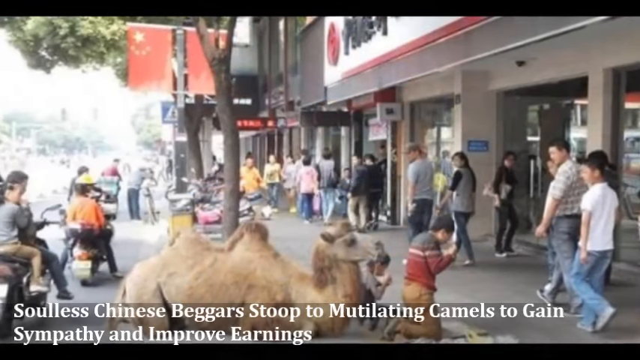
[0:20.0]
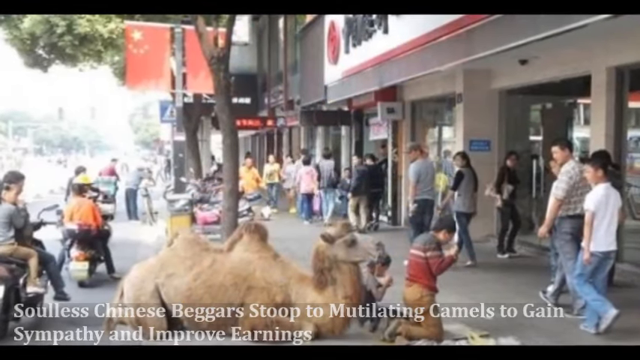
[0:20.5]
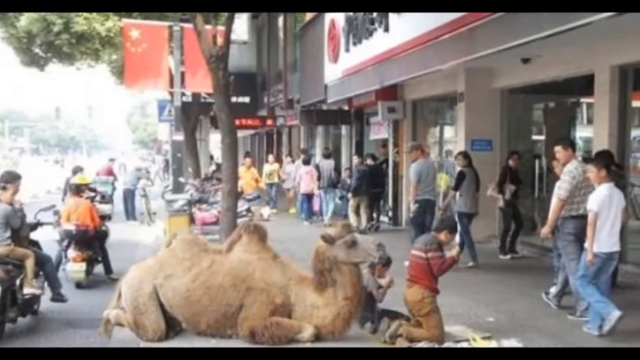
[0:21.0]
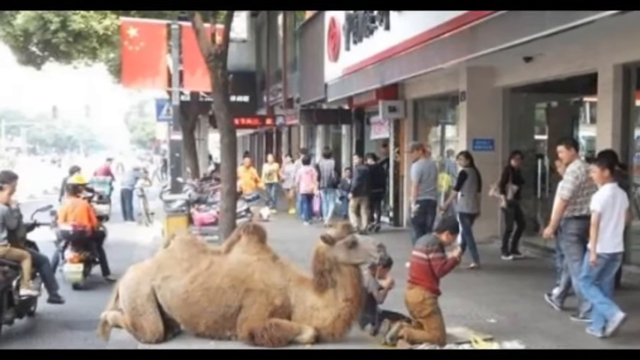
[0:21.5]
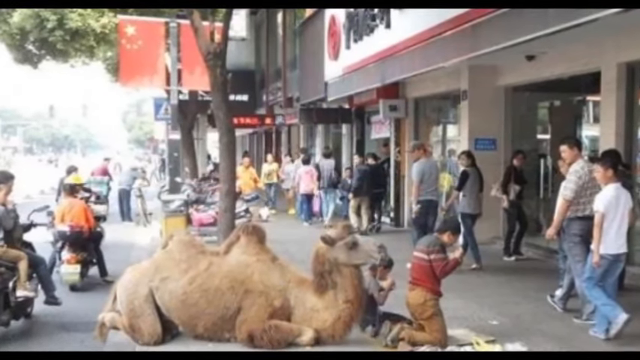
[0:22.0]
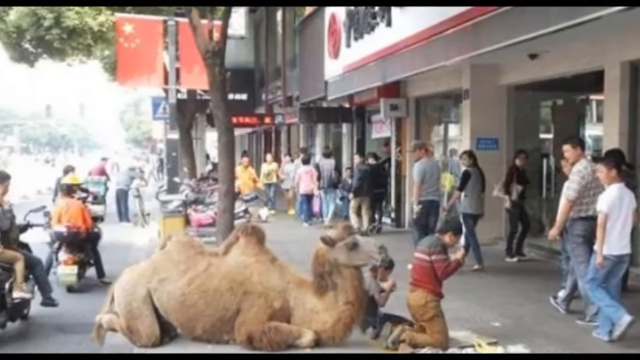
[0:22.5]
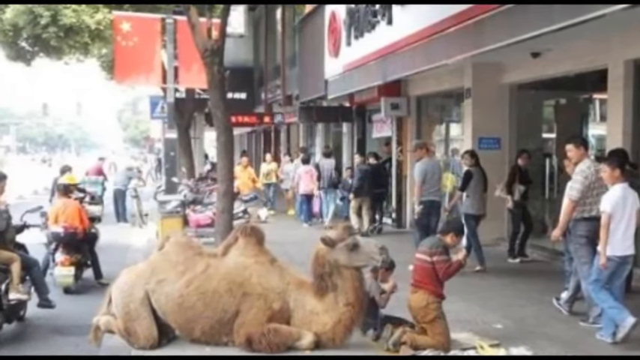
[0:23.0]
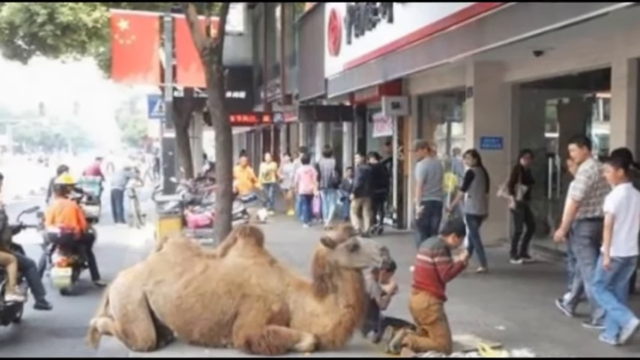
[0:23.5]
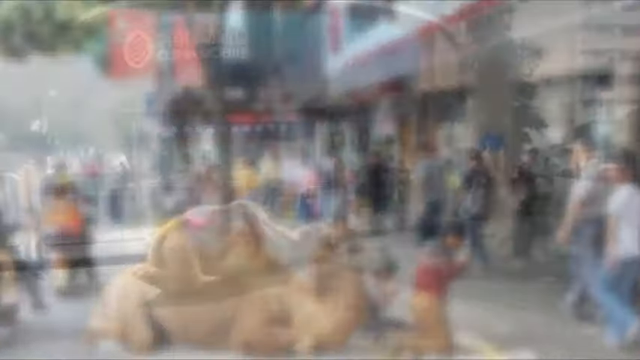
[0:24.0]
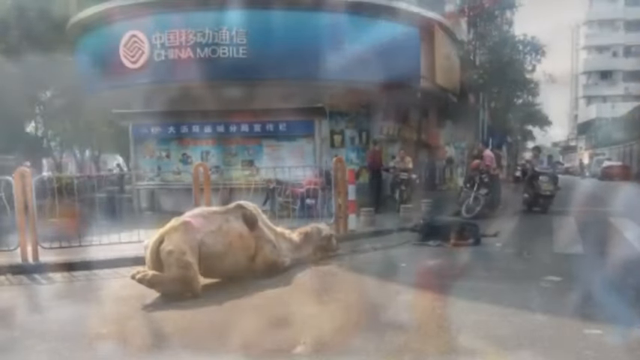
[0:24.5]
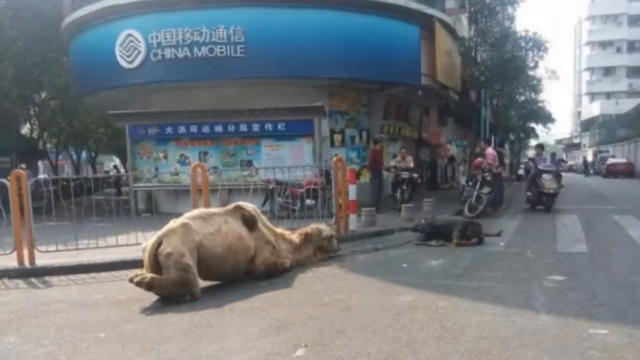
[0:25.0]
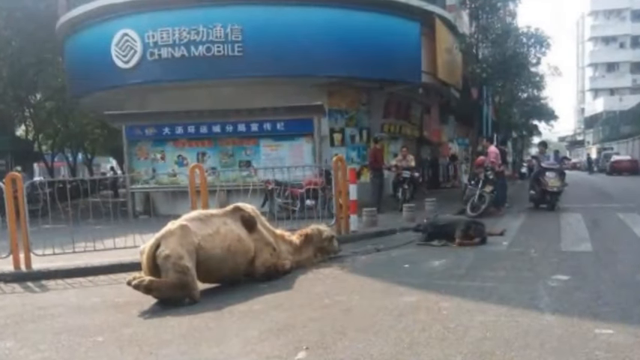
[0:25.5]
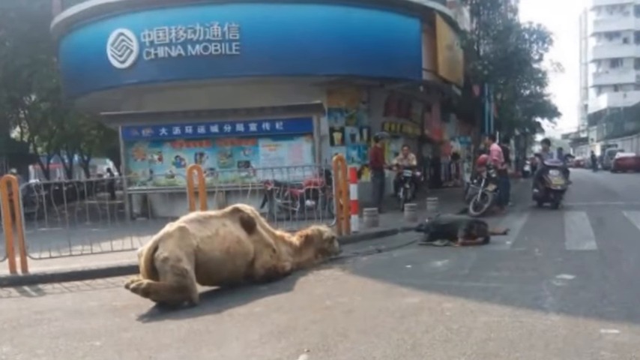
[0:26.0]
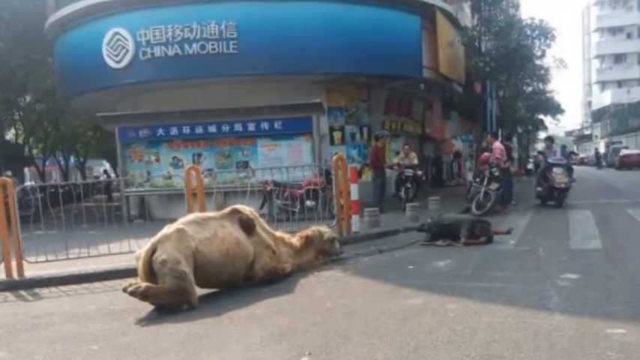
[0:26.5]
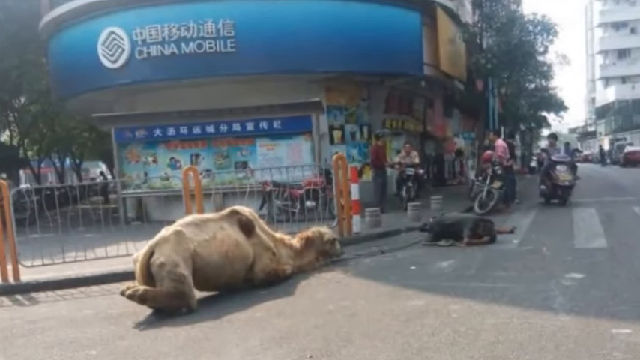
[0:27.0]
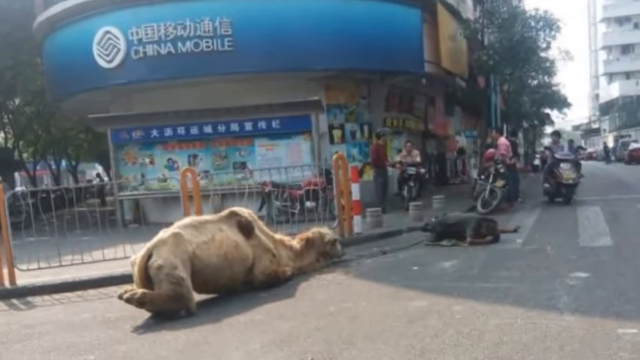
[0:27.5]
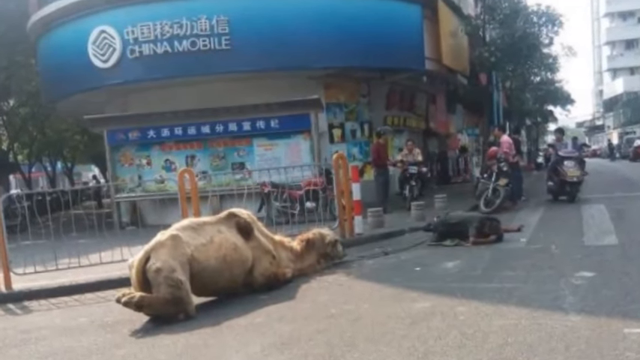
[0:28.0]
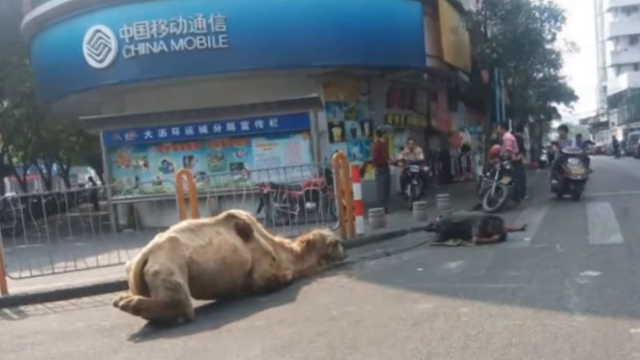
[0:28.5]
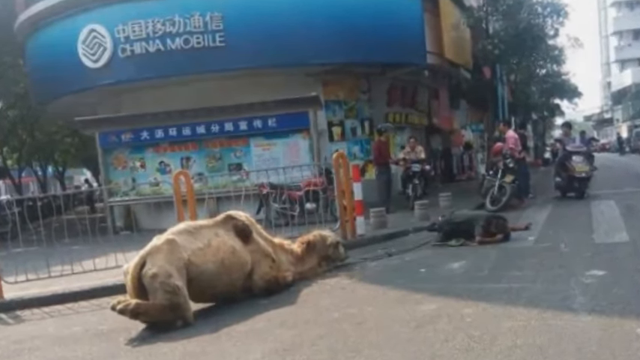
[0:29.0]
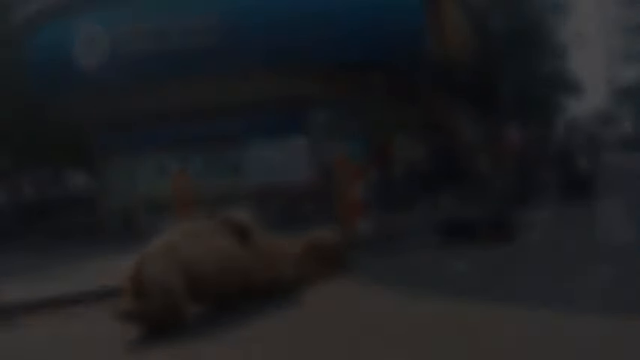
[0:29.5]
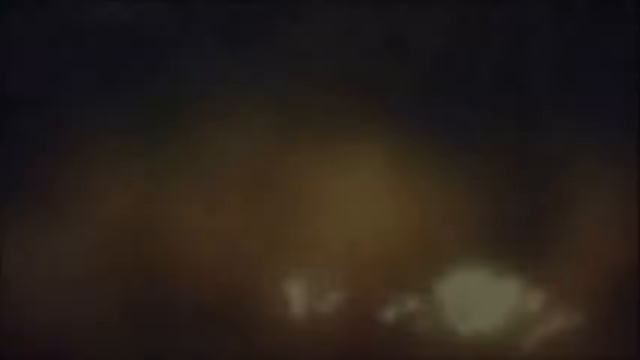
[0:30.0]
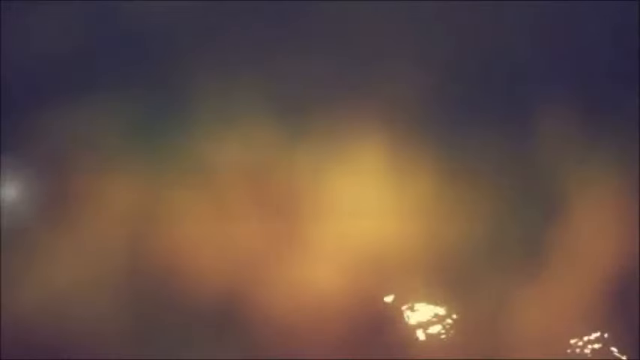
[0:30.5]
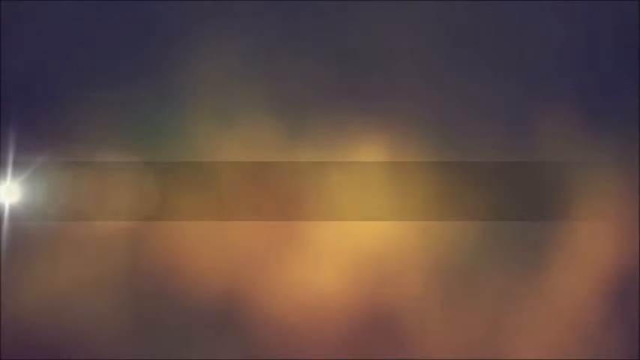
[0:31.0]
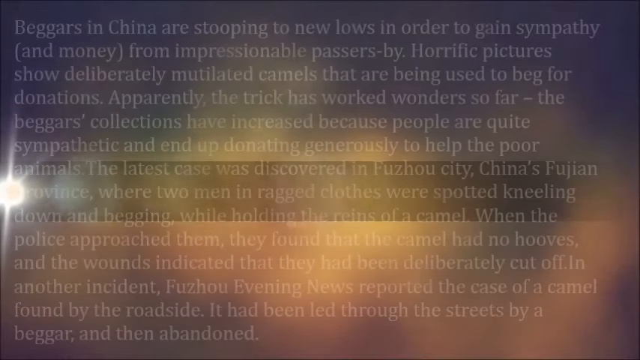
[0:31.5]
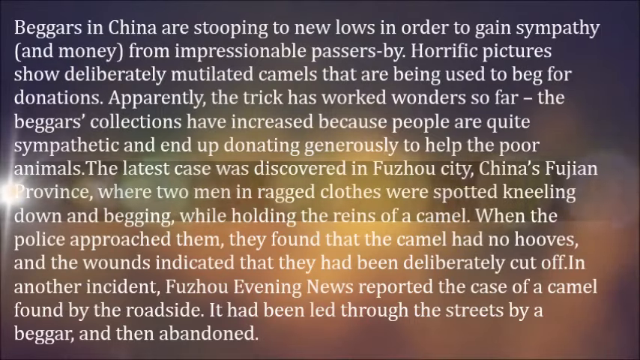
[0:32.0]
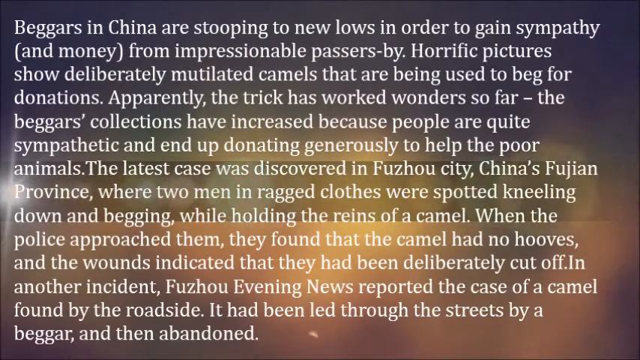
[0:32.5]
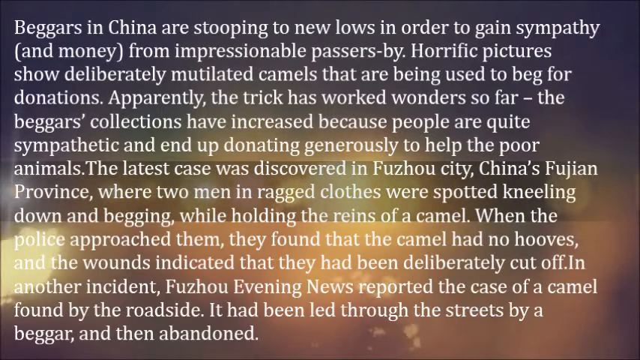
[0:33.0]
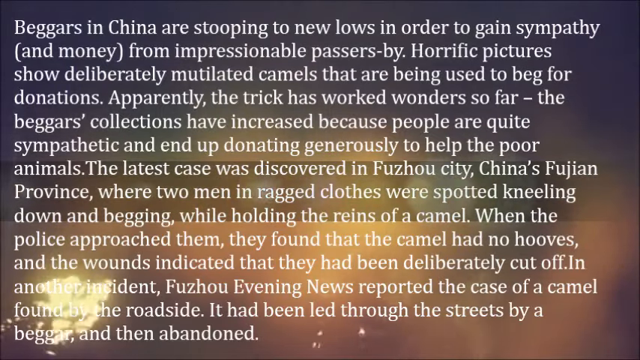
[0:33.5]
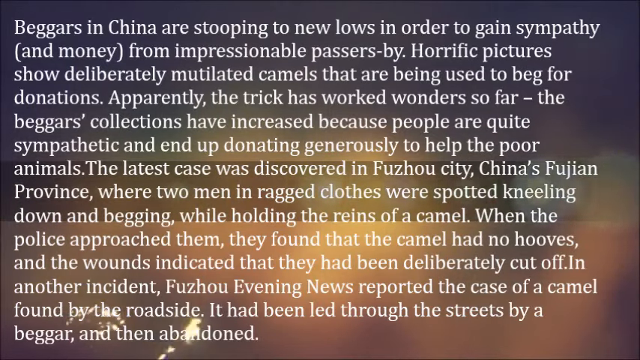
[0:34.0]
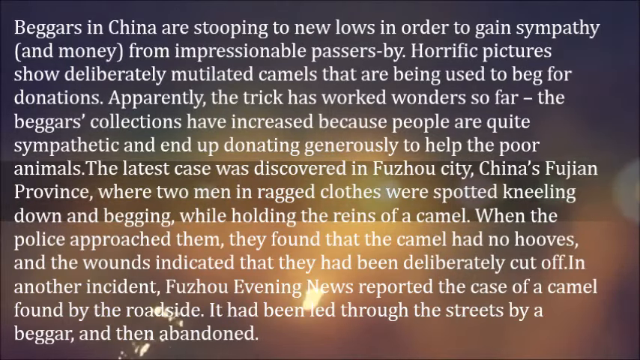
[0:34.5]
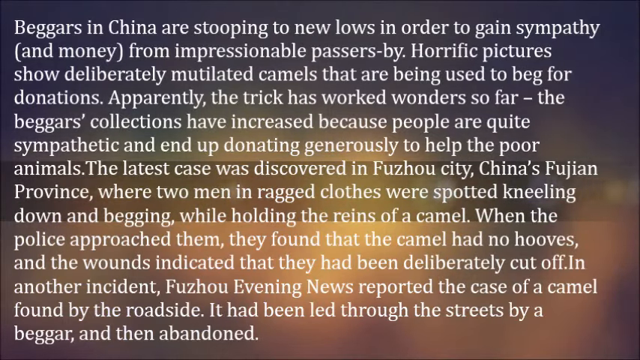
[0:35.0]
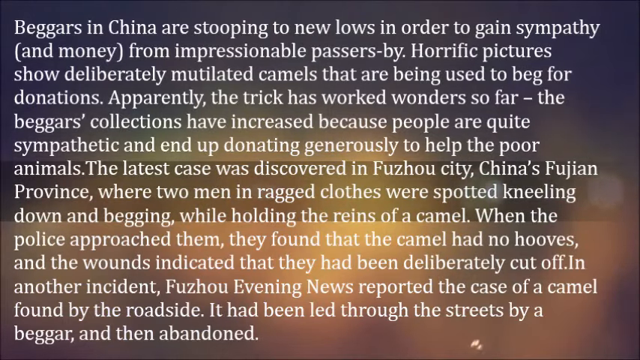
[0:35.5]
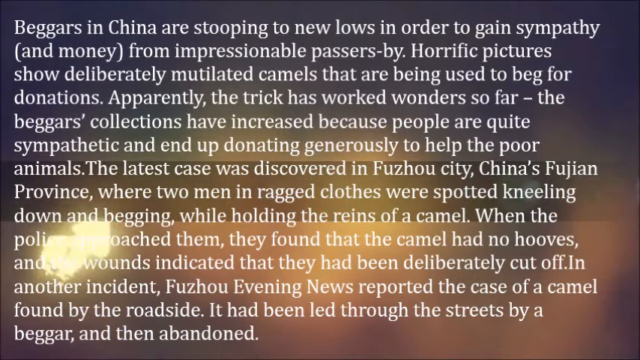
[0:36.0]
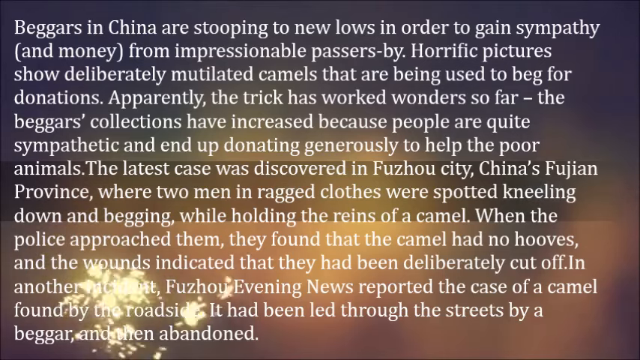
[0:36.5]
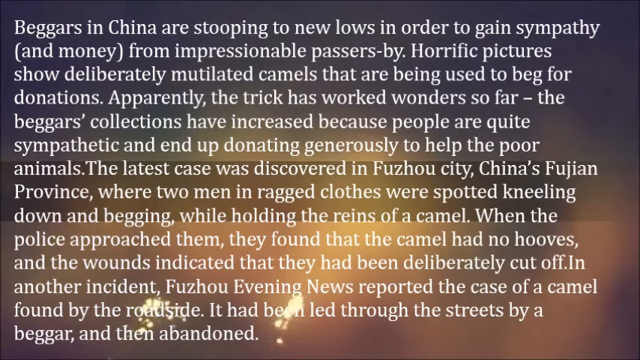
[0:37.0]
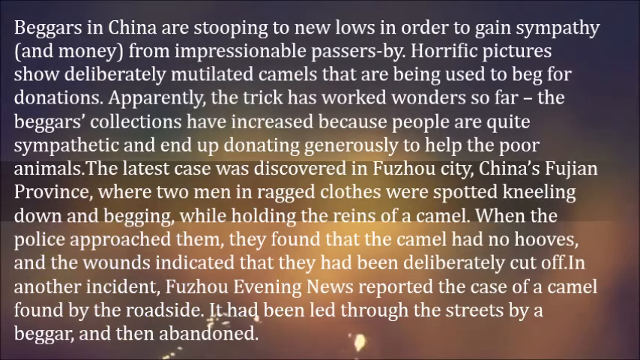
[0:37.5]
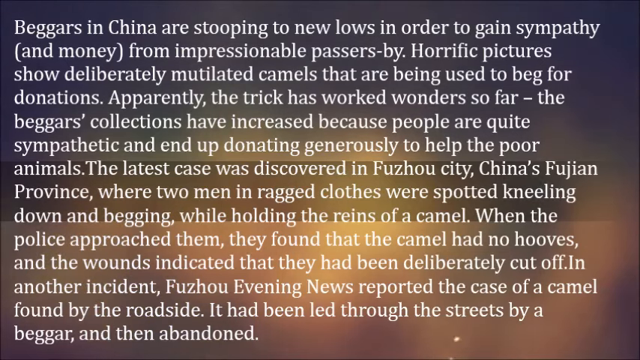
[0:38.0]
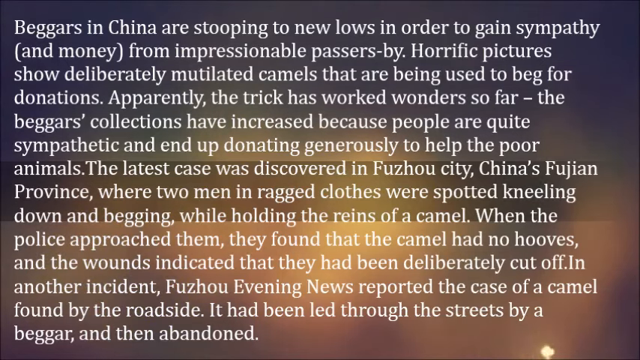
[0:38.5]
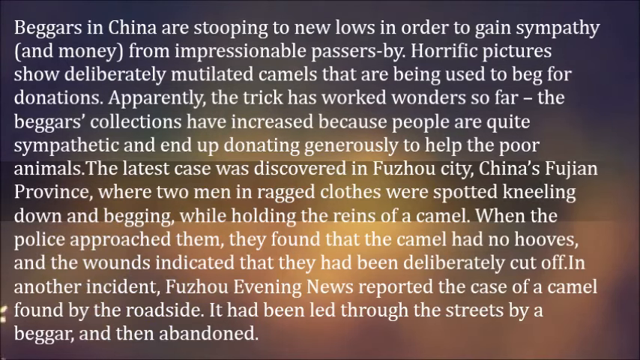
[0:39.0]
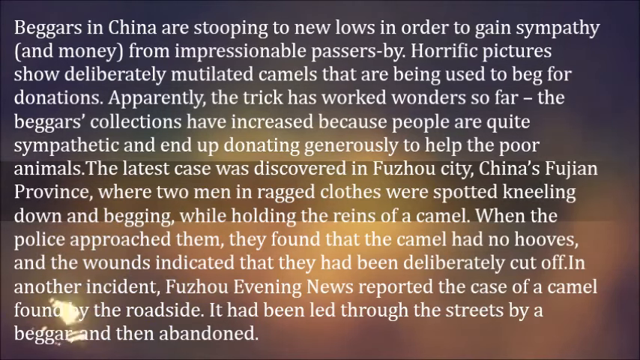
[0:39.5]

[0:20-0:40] The beggar is on the street with the camel behind him. The camel is brown and has two humps. The person appears to be leaning forward as if to pray or to beg for money. People walking by on the street stare at the man and the camel, and people on mopeds and cars pass by. Words at the bottom of the screen say "Chinese beggars stooped to mutilating camels to beg for money". It is a still image, and the view focuses in on the camel and the beggar. In the next scene, a camel that appears to have been injured or mutilated in some way is shown with someone begging in the street, while people on mopeds, in cars, on foot and on bicycles go by the beggar and the injured camel. In the background are a sign for China Mobile and what appears to be some sort of newsstand. The still image slowly fades away, and many words appear on the screen describing the scene, stating that the camels had been injured deliberately and that in some cases their hooves had been mutilated or cut off, with just the stumps left, to elicit sympathy for the beggars.